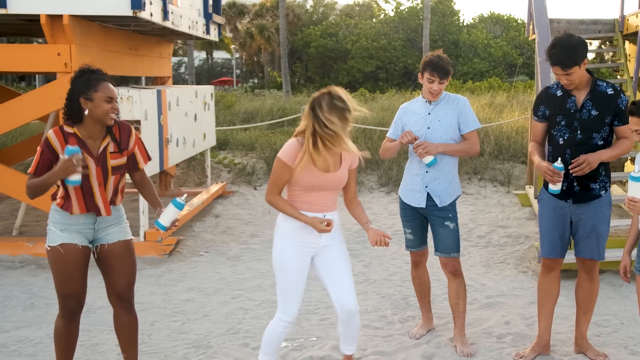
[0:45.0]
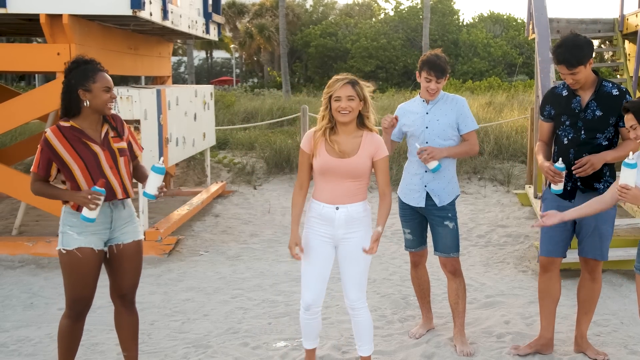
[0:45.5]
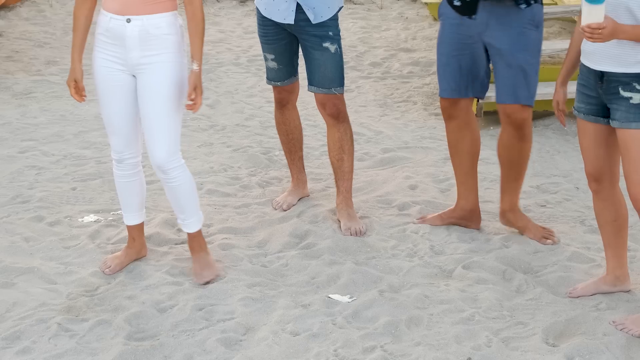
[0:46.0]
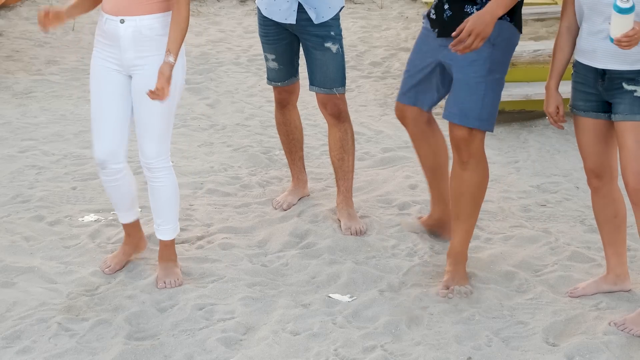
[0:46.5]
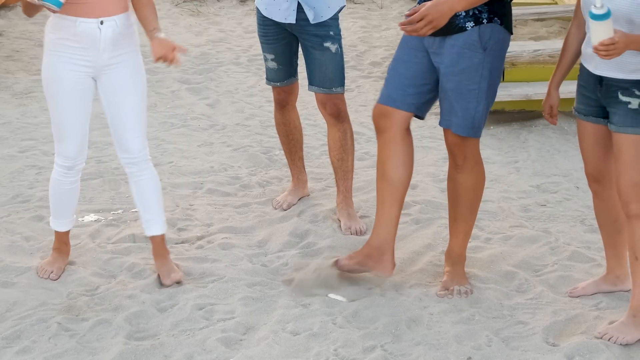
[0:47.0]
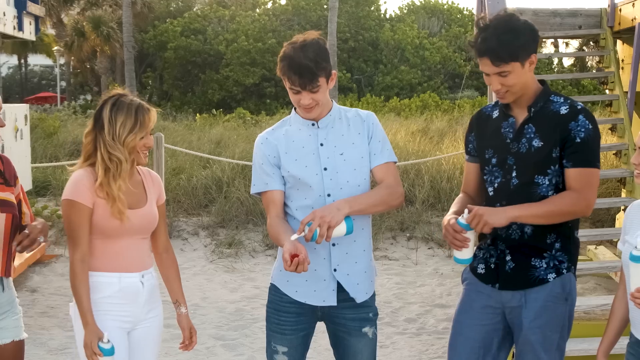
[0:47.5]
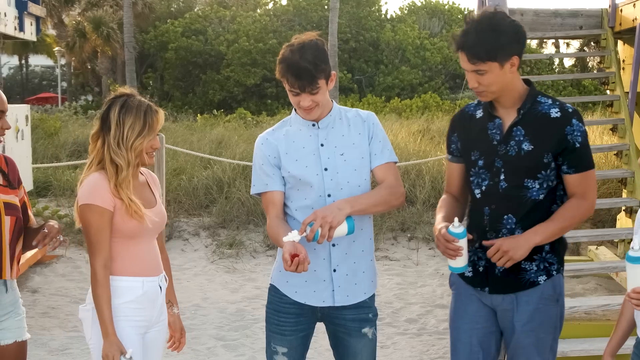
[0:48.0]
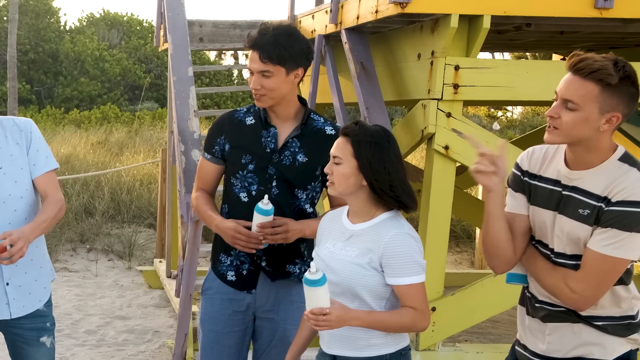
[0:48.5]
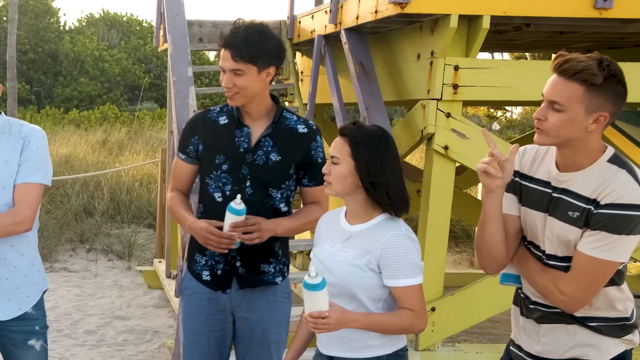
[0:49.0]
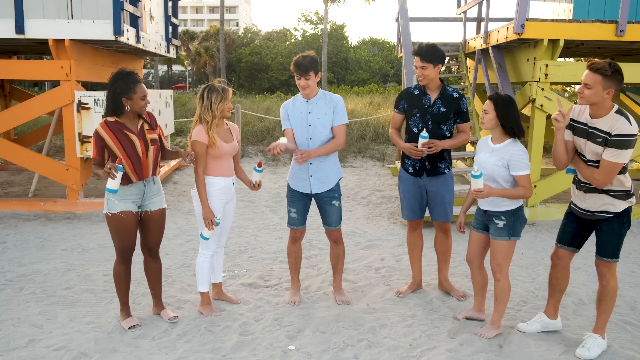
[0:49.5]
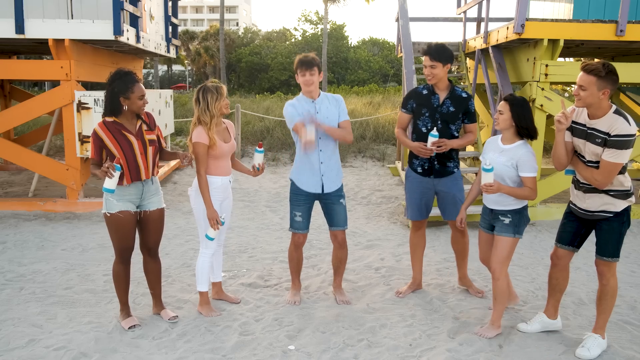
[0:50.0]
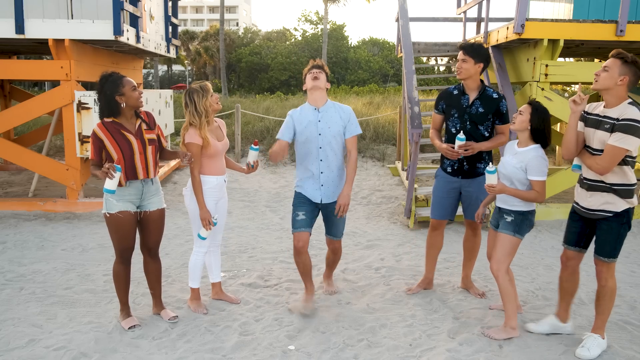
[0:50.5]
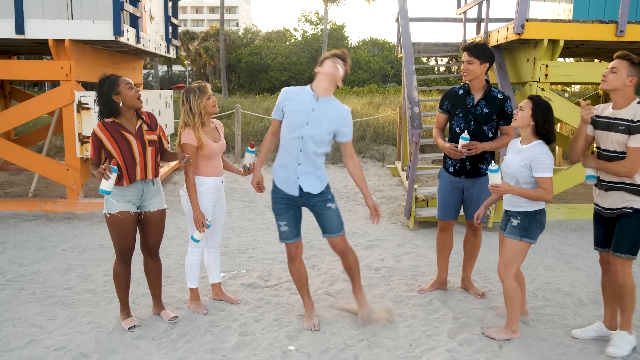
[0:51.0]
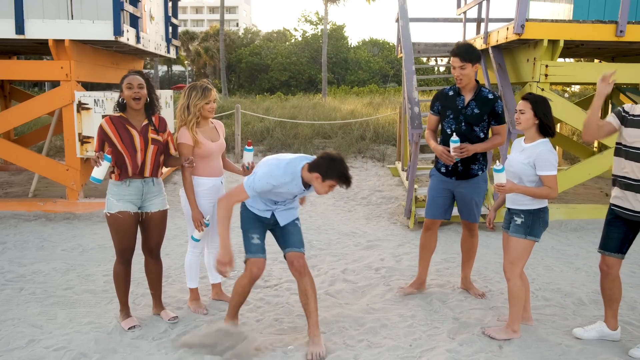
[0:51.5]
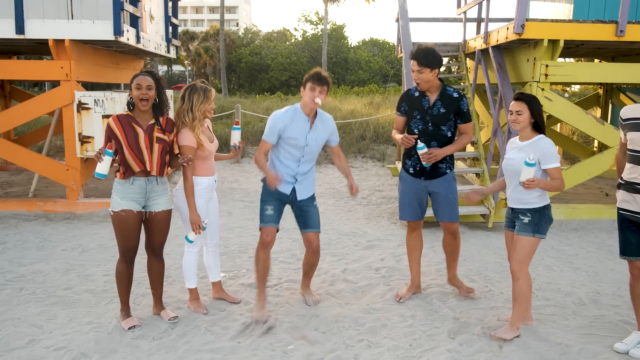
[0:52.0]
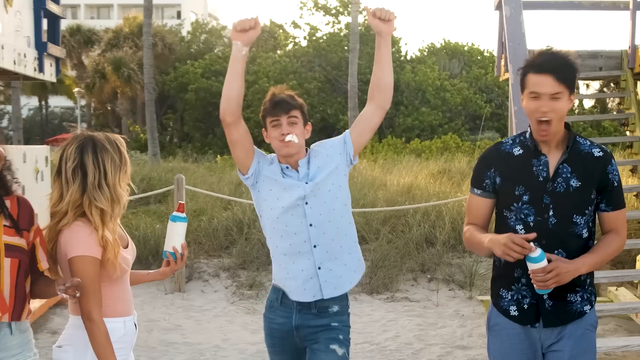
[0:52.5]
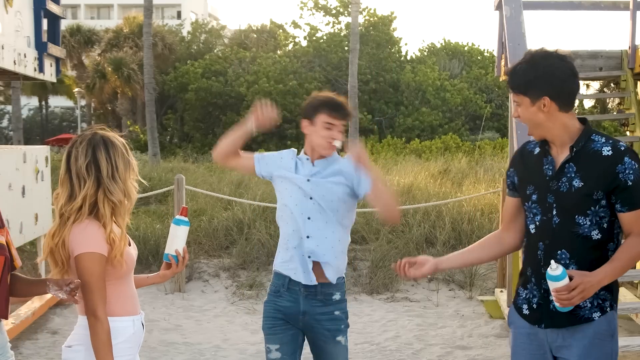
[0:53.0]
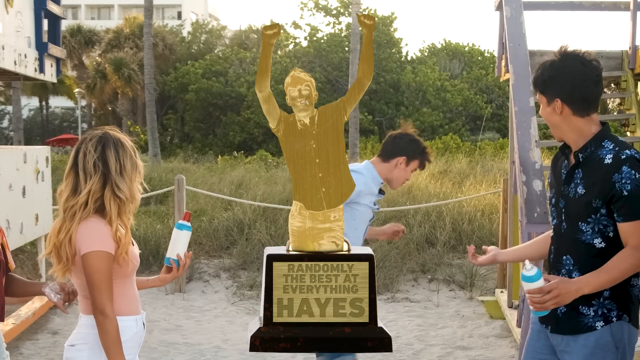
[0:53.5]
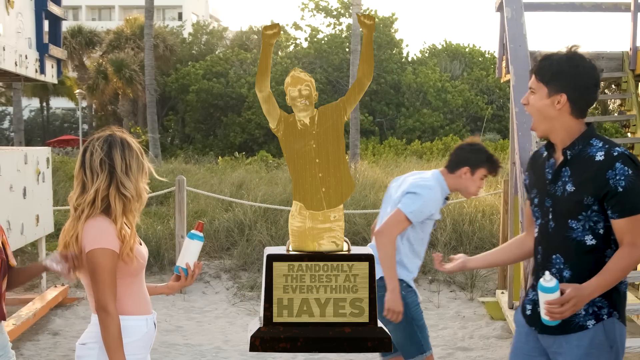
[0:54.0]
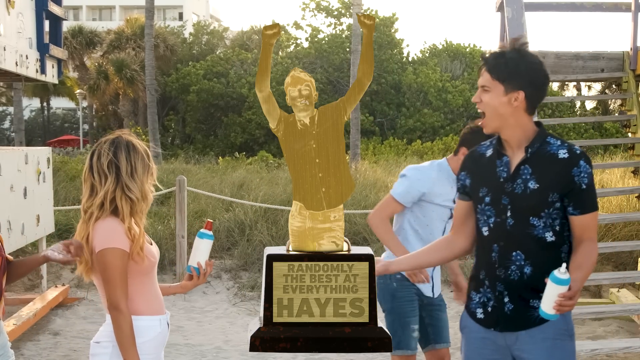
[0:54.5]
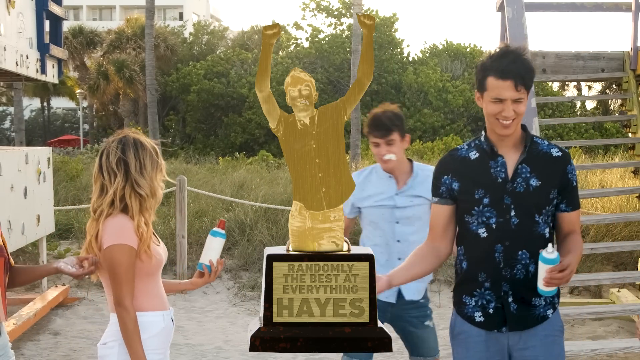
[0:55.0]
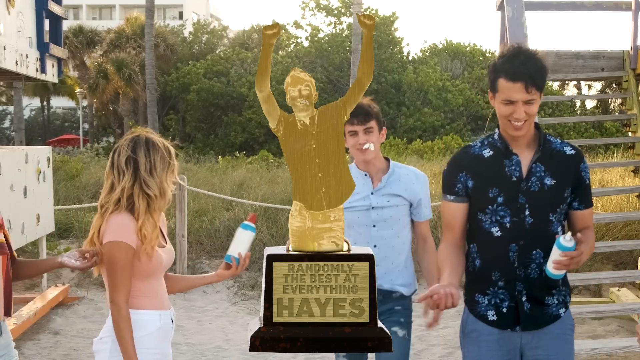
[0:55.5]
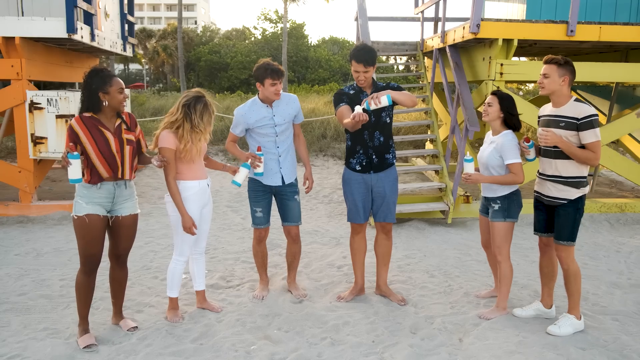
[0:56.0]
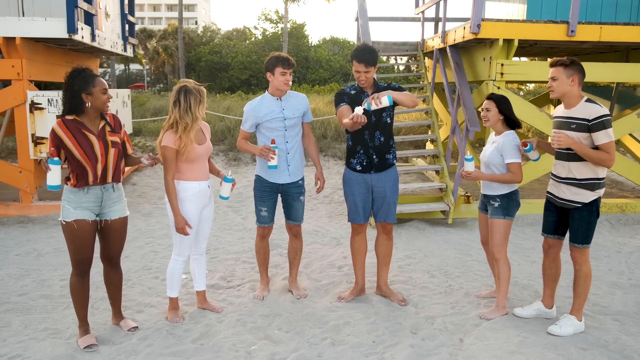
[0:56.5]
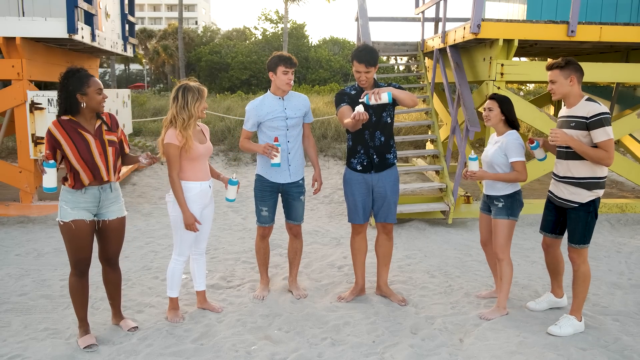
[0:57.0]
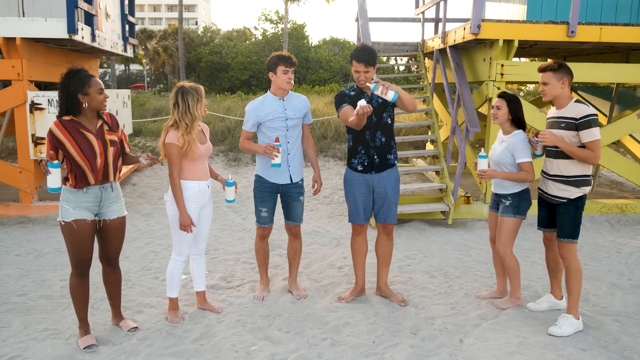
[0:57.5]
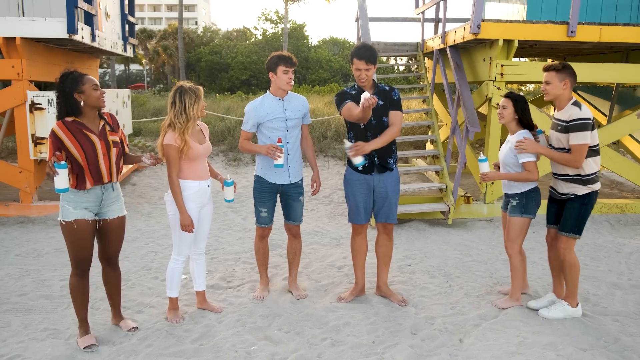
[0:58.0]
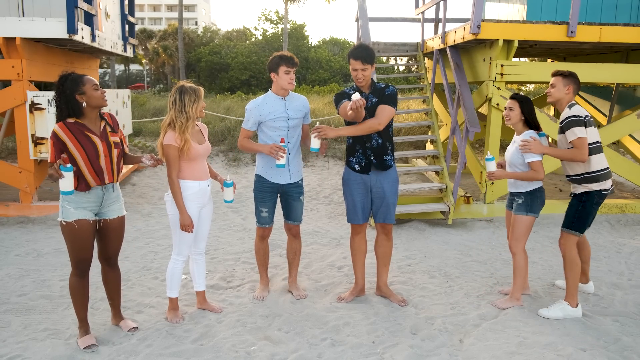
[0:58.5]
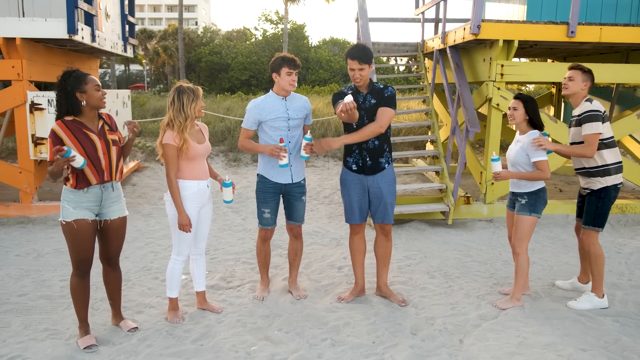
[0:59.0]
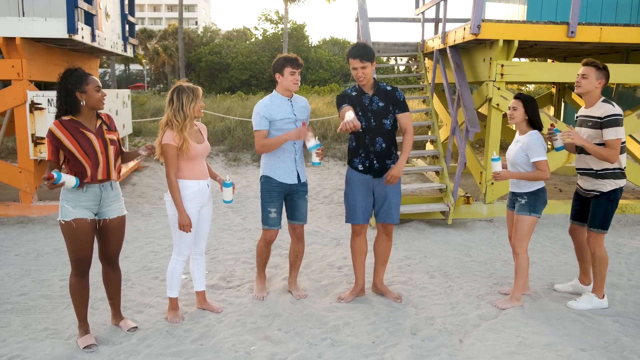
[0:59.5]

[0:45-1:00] After Chachi's whipped cream falls into the sand, the group laughs, and Aaron covers up the dollop of whipped cream in the sand, apparently so he doesn't step in it. Hayes tries next: he puts whipped cream on the inside of his right arm, raises the arm, stops it with his left hand, and catches the whipped cream in his mouth. A gold medal trophy graphic meant to represent Hayes then appears on screen with the text "Randomly the best at everything, Hayes". Aaron then starts the challenge, putting whipped cream on the inside of his wrist; he hands his can of whipped cream to Hayes to hold, then raises his arm and hits his hand. Chachi is a young girl wearing long white pants and a pinkish shirt. Hayes is a teenage boy wearing knee-length jean shorts and a blue short-sleeved button-down shirt. Aaron is a teenage boy wearing blue shorts and a dark blue button-down shirt with flowers on it. Hayley is a teenage girl wearing jean shorts and a white T-shirt.